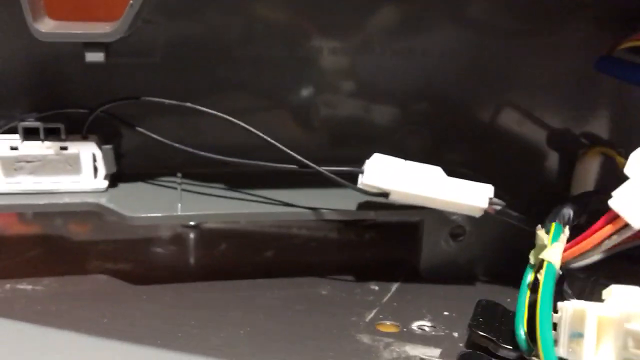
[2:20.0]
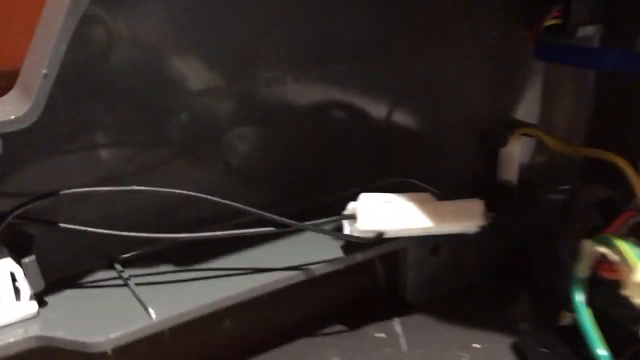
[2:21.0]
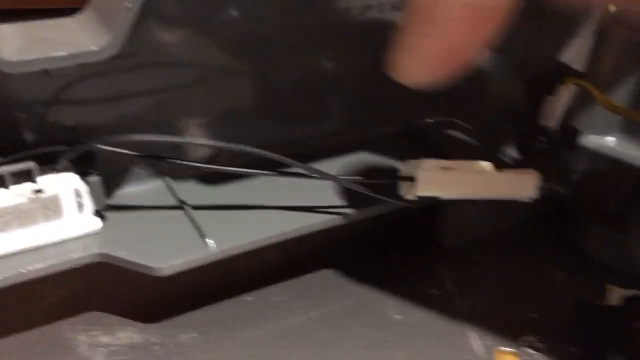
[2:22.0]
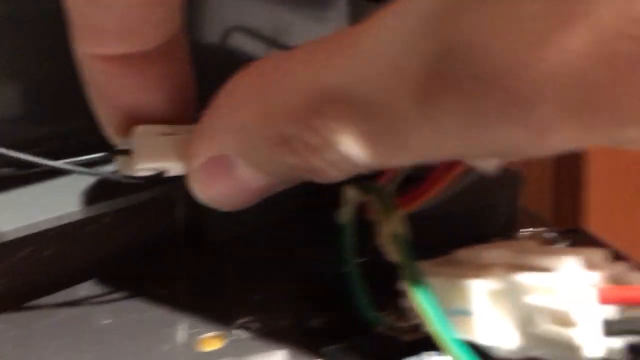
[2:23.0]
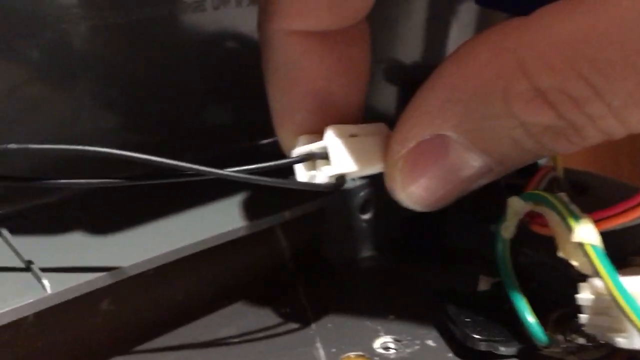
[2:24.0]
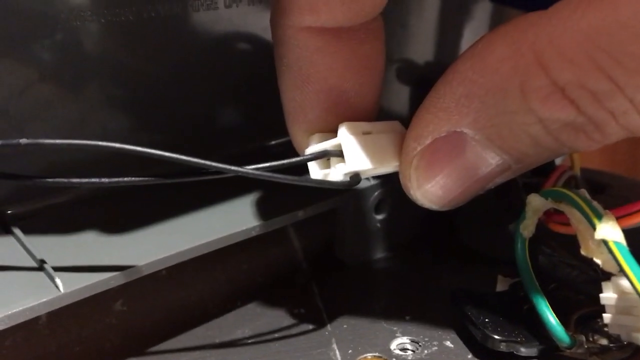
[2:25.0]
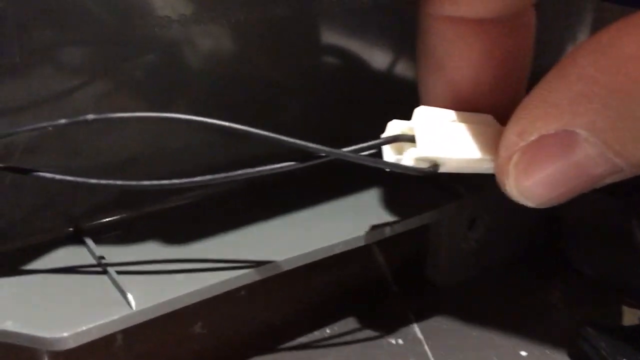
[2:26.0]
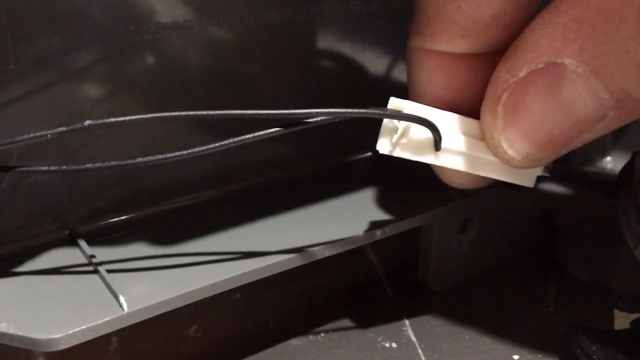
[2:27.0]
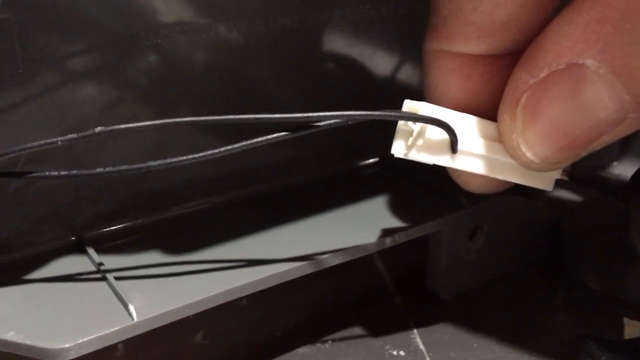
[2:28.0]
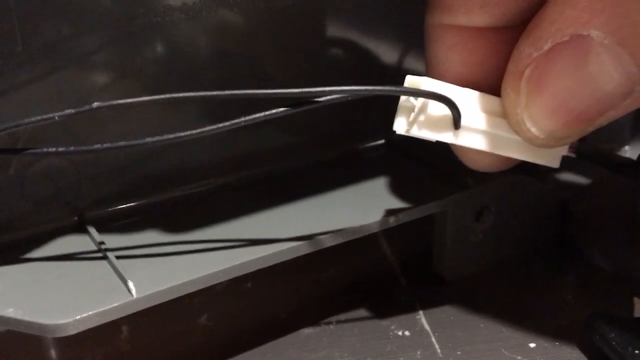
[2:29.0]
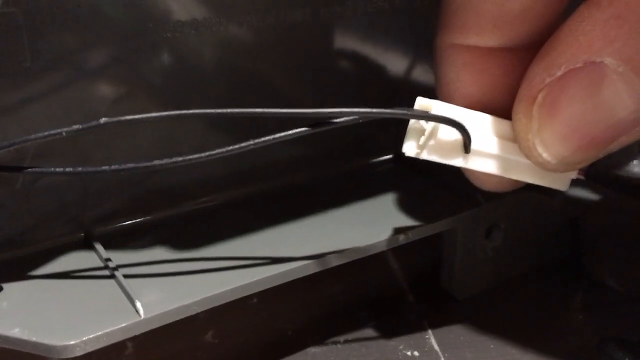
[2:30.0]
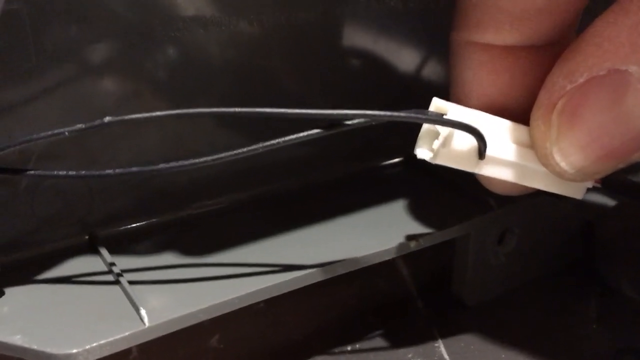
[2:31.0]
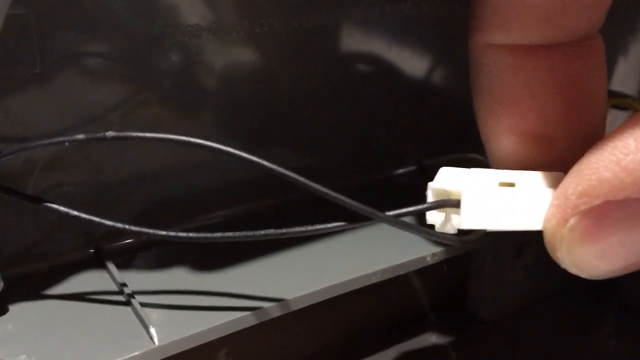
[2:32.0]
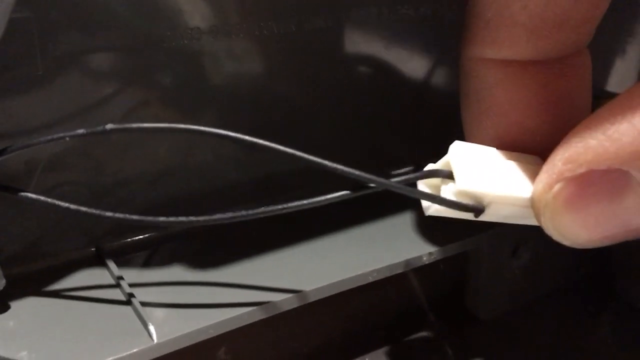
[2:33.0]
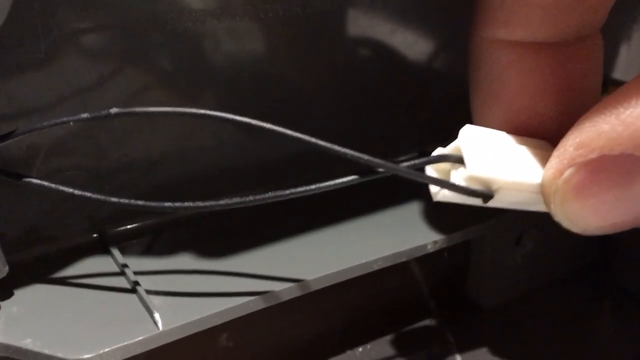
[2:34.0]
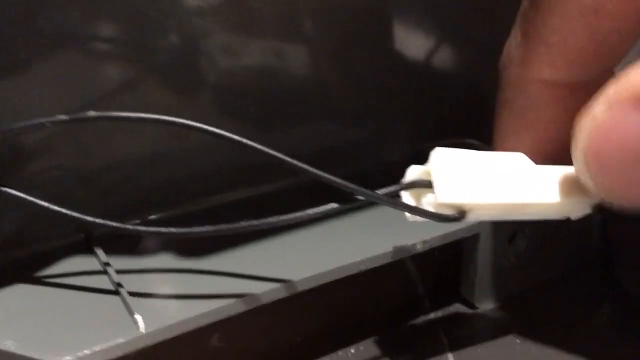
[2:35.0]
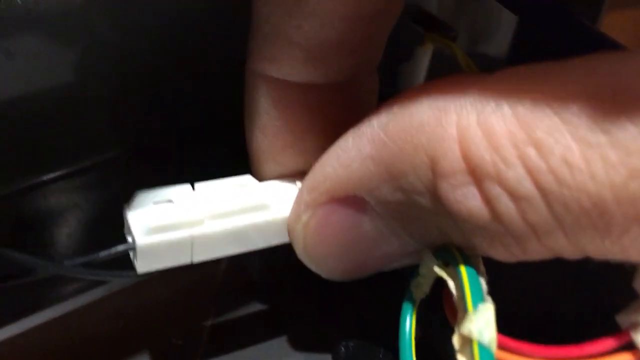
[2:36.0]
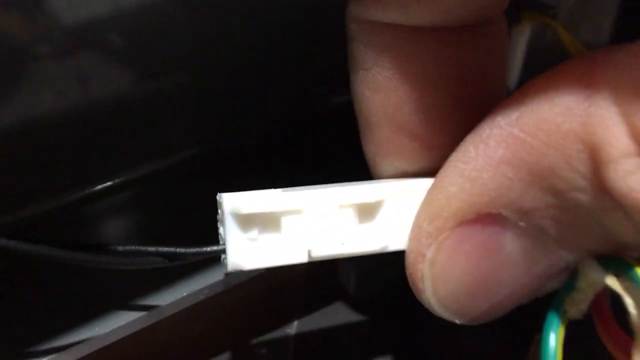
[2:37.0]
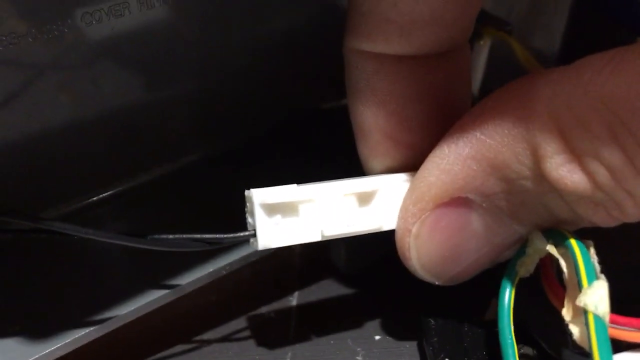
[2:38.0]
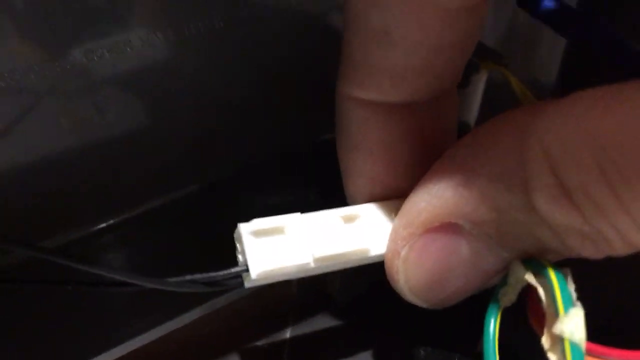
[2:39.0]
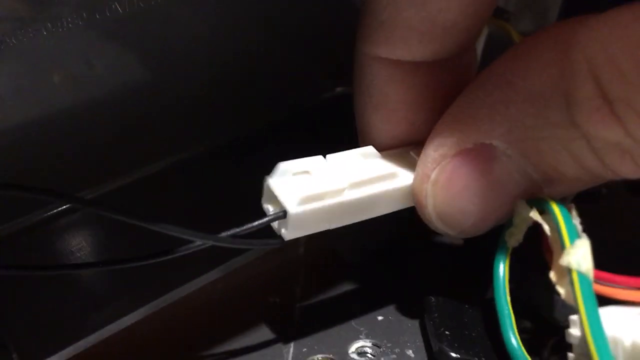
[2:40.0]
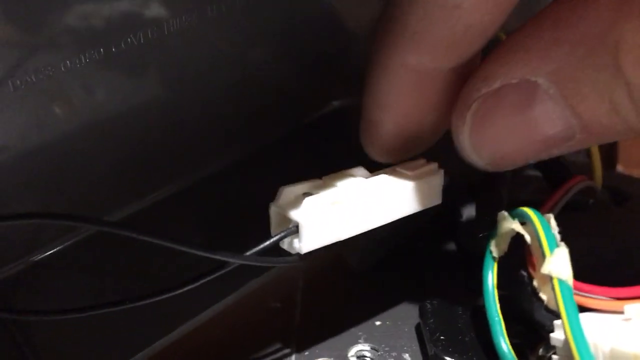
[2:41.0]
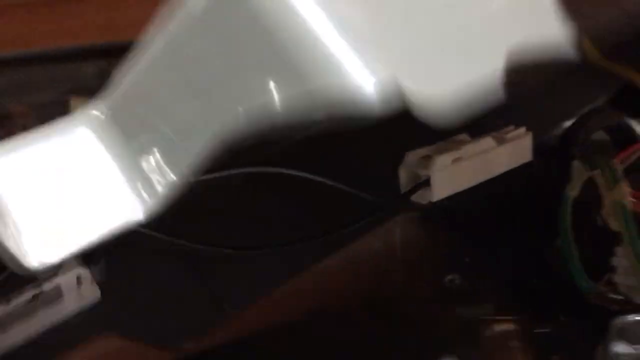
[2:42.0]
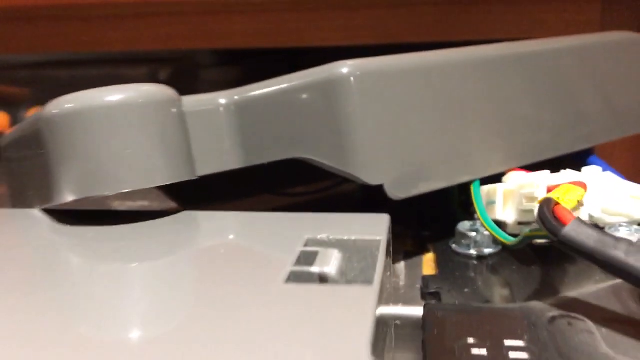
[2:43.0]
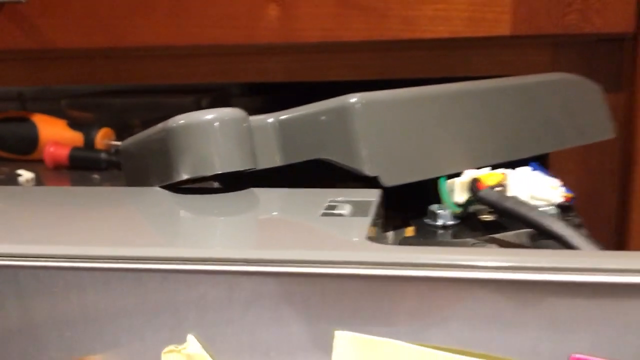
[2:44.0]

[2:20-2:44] In a slightly wide frame, a white person's hand comes in from the upper right corner and comes down onto power connectors and cables at the bottom. Holding it with the index finger and thumb, the hand grabs one of the white connectors, which has two black wires coming out of it to the left, and rotates it around 90 degrees, rotates it back to its original position, then rotates it another 90 degrees in the opposite direction. The hand then drops it and also releases the cap at the very top, a gray plastic cover. As the camera zooms out, the cap can be seen to go on the top corner of the right-hand side of the stainless steel fridge. Under where the cap would go are a green wire and a screw on the left, and a big thick black wire coming out of that area and going down the right-hand side of the fridge. A brown cabinet is in the background at the top.